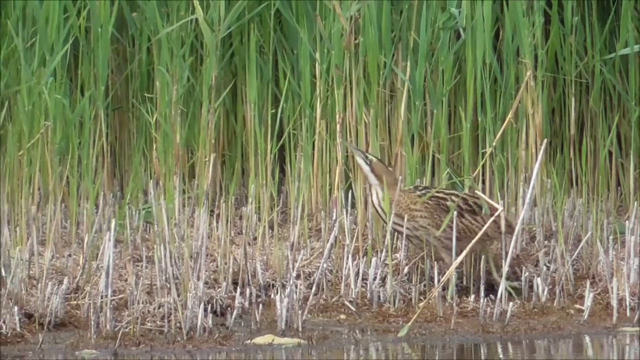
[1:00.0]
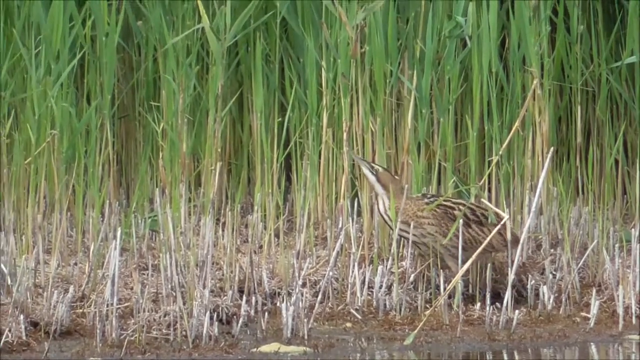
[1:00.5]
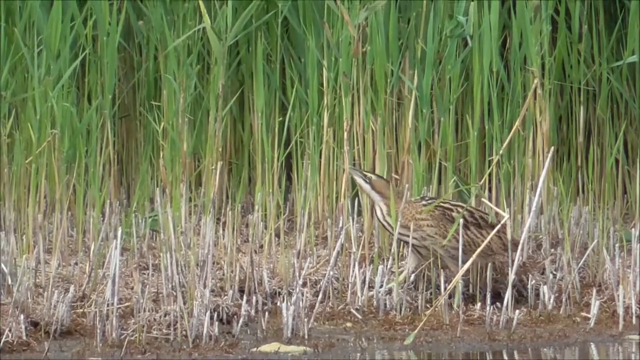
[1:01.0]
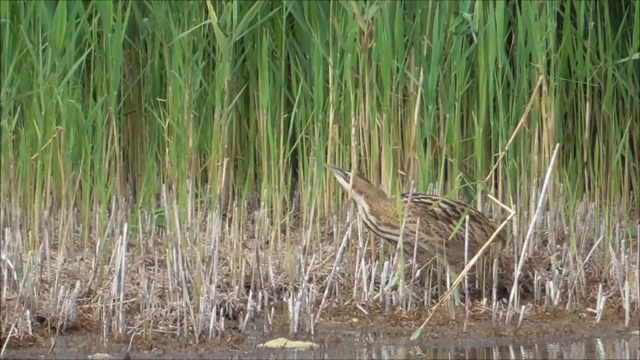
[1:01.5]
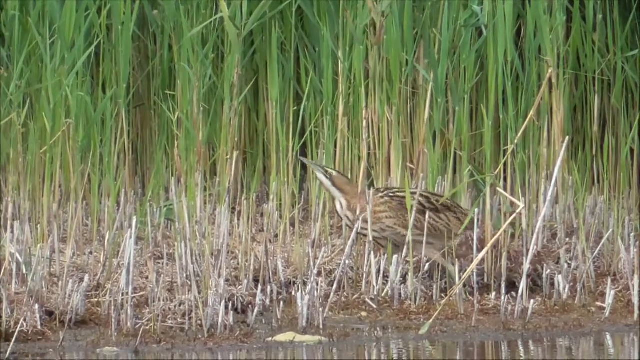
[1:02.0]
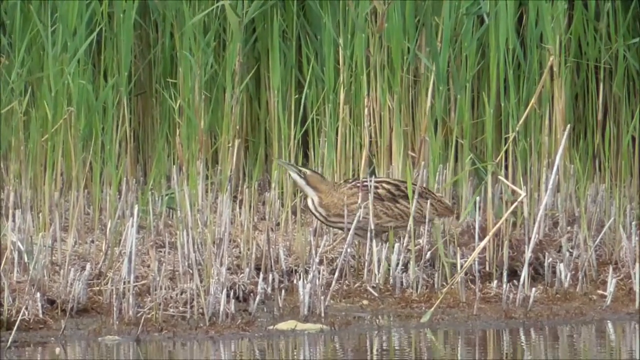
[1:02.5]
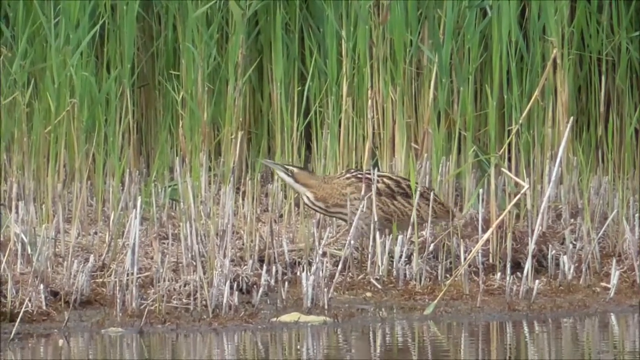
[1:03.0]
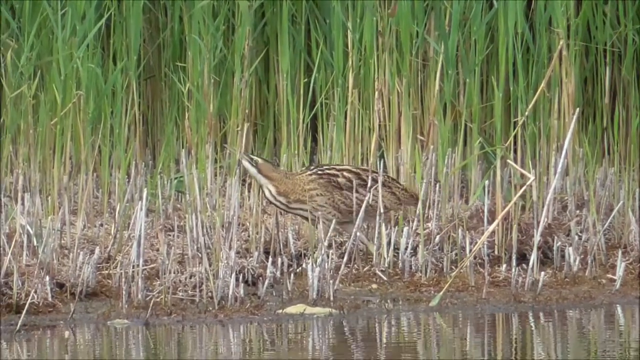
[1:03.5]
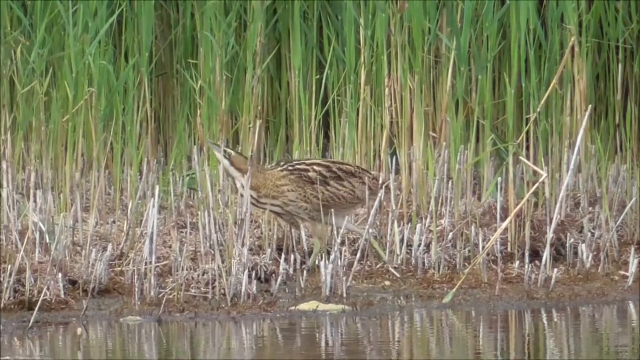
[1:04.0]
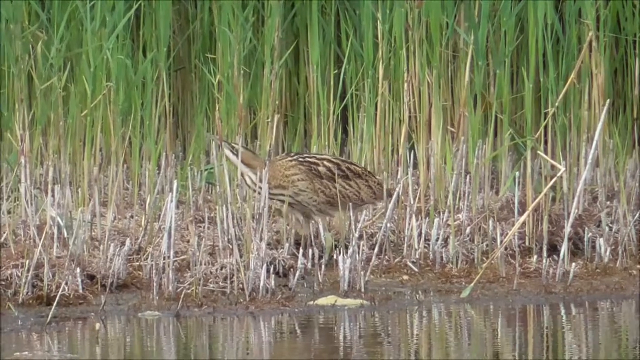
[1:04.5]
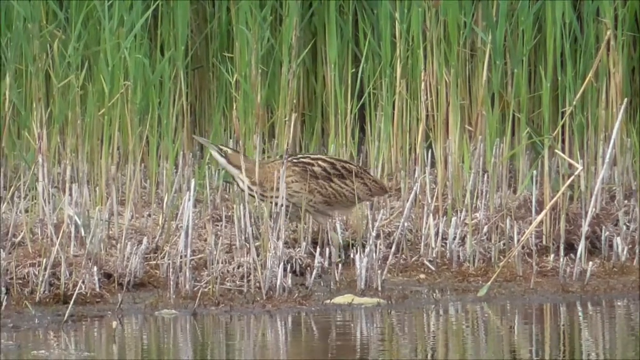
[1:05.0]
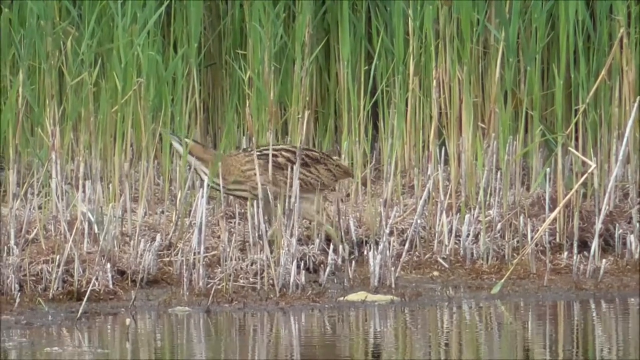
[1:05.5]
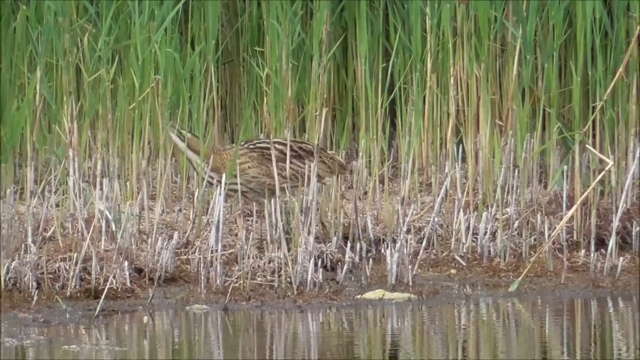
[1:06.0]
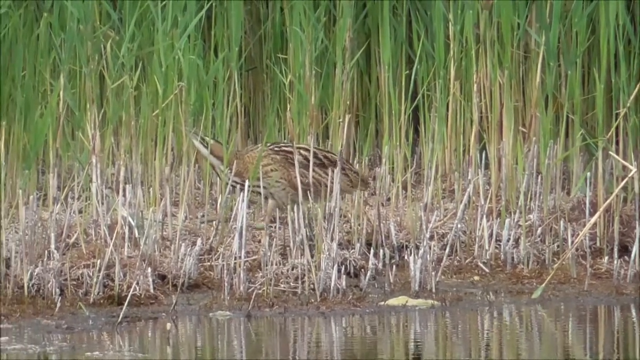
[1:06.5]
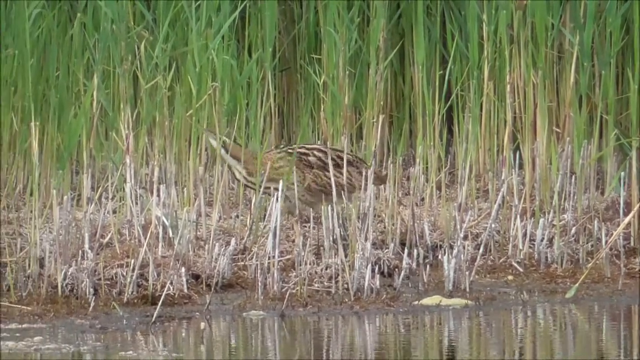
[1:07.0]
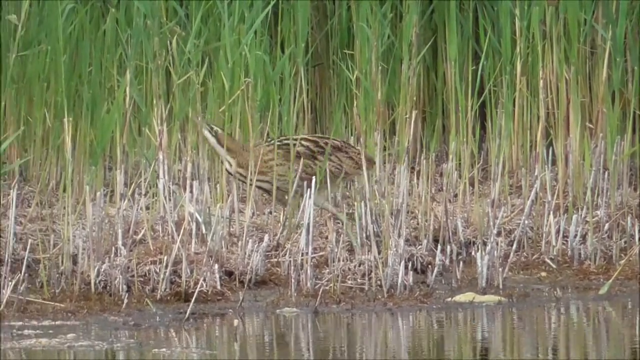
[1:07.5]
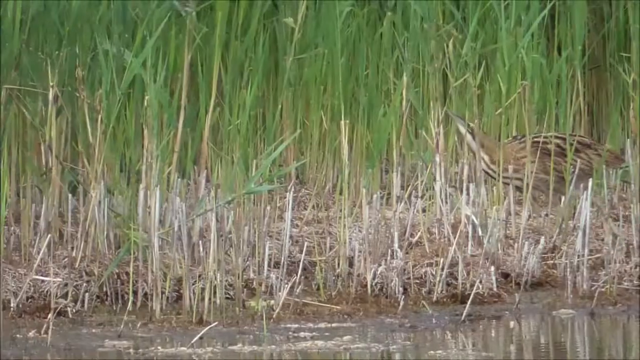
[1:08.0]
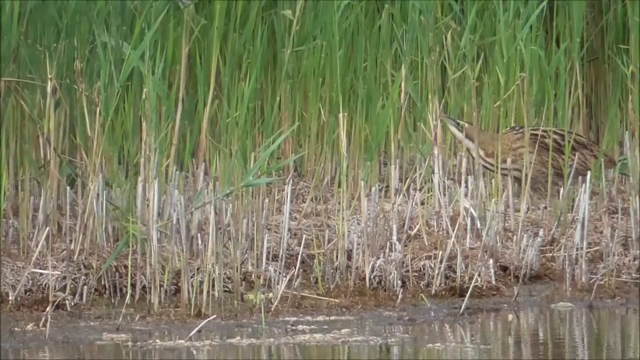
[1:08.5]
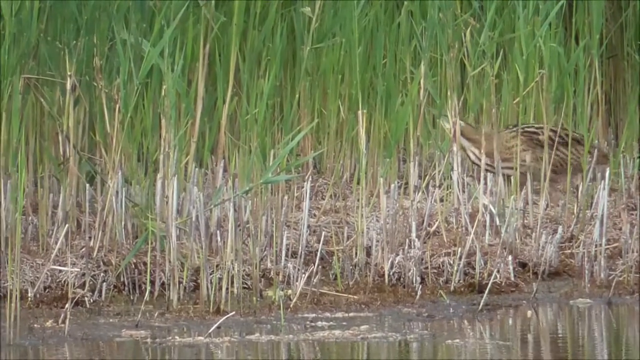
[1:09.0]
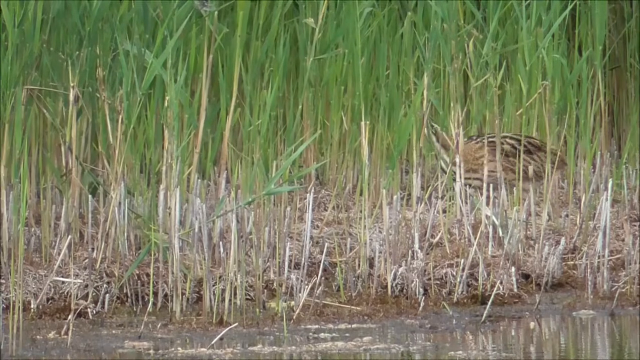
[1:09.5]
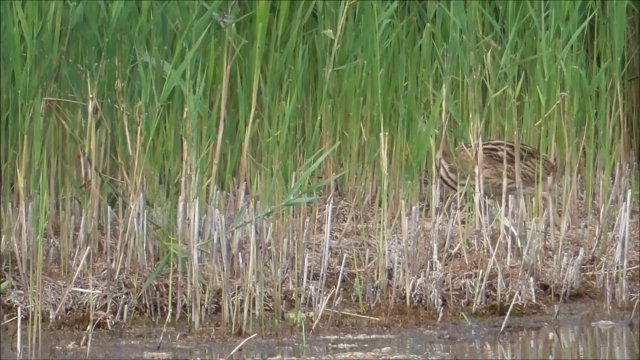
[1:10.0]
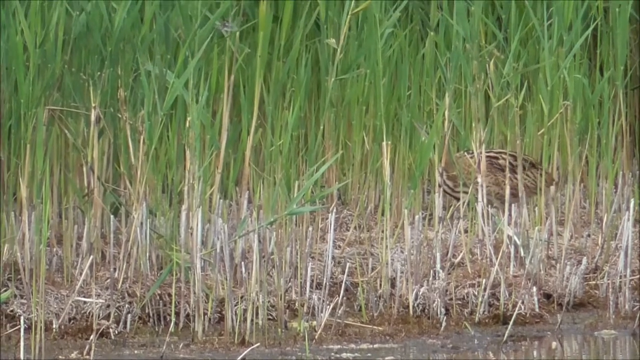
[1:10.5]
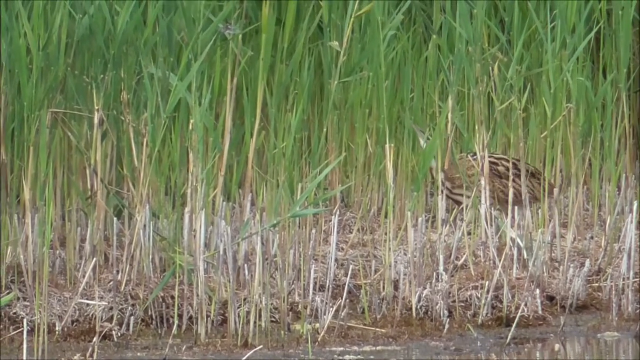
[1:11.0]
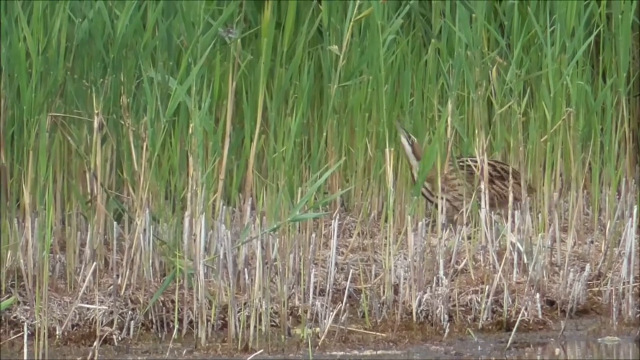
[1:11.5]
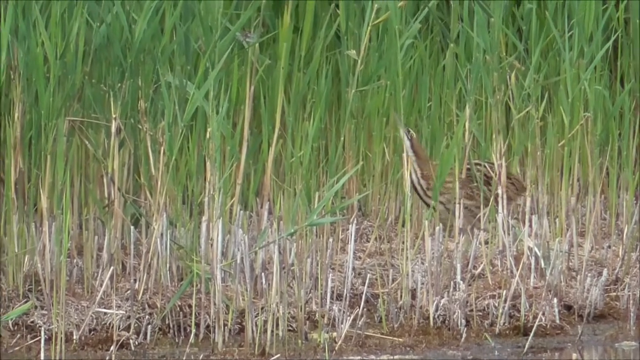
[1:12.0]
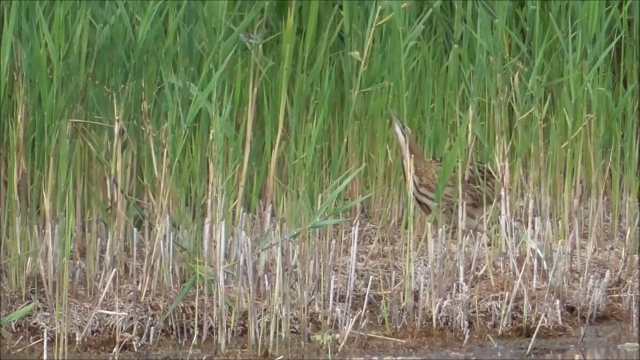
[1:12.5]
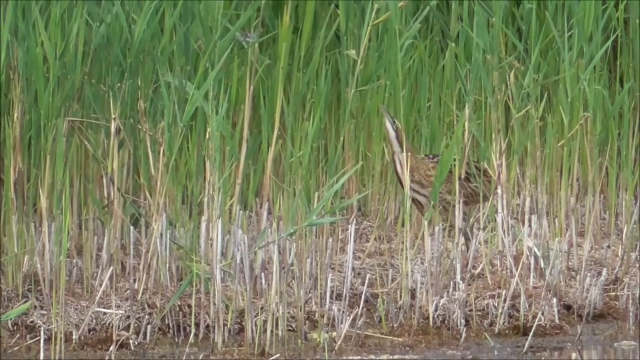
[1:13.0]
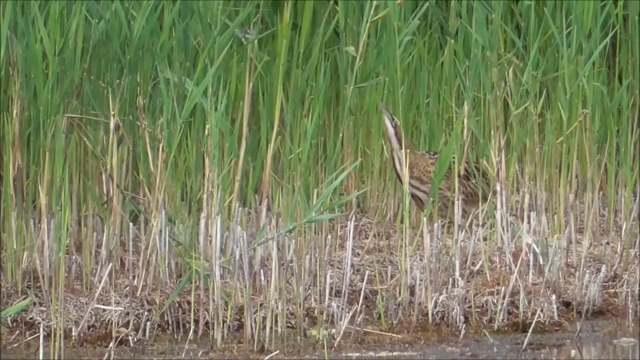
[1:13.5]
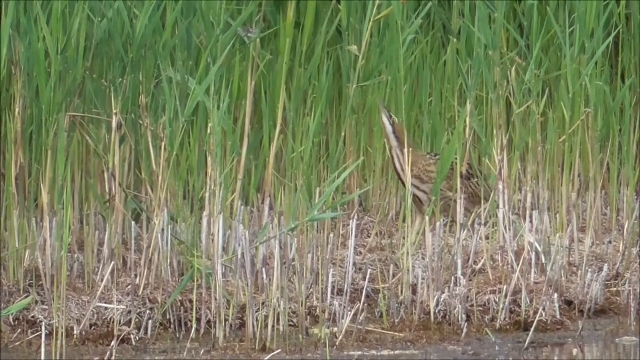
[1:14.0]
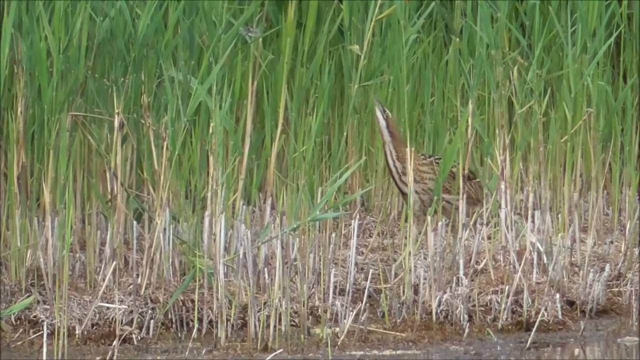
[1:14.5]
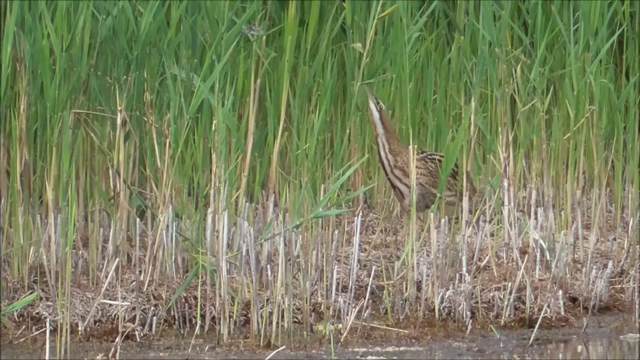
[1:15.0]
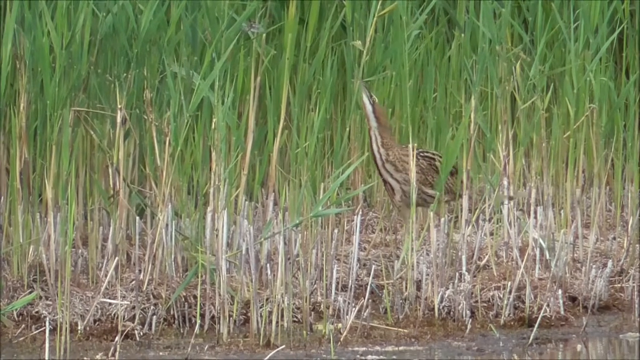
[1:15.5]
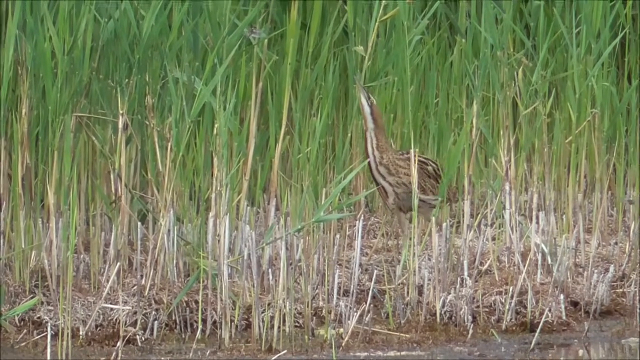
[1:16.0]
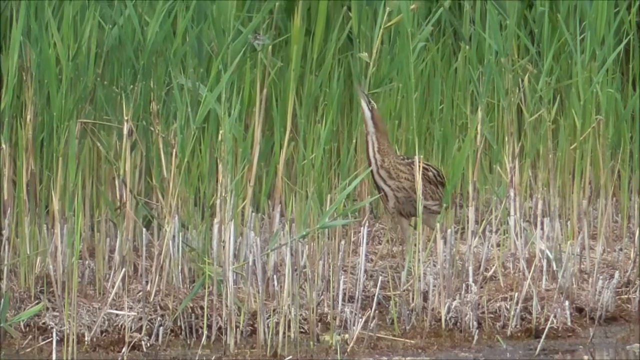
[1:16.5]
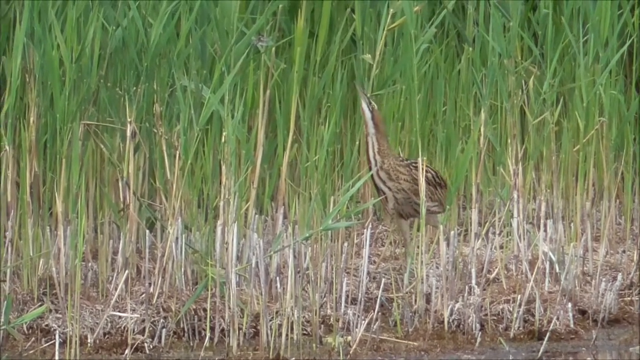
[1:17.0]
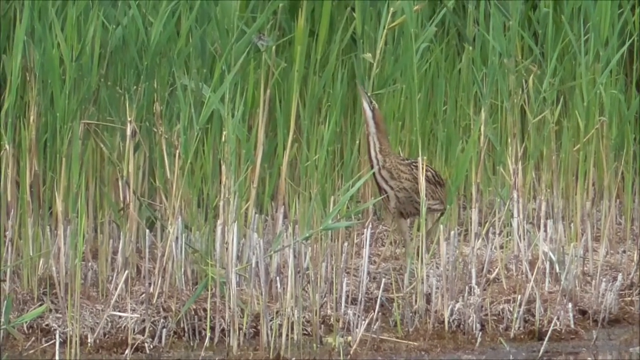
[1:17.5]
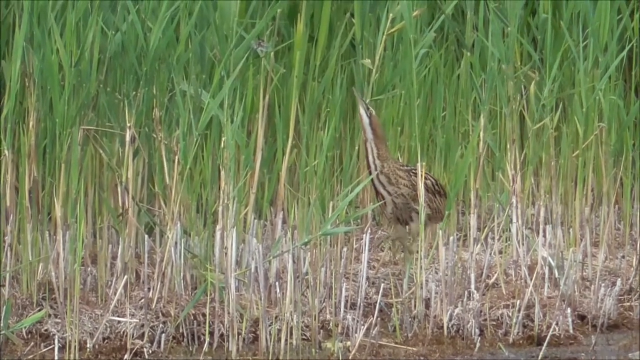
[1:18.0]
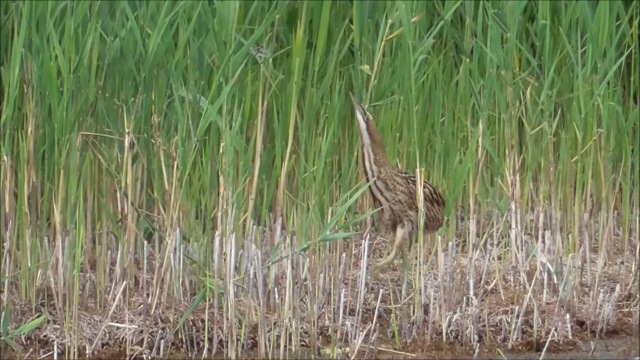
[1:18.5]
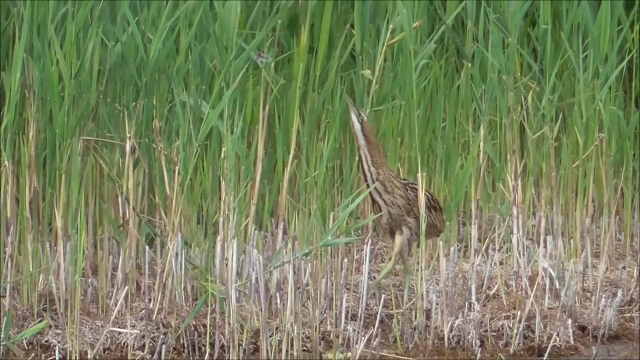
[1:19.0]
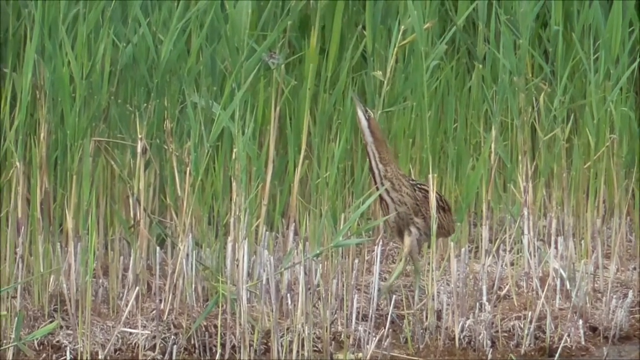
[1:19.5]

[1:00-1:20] The bird is still walking toward the left, and the camera sort of follows it, turning as needed to keep the bird in view. As the bird walks further left, some of the plants in front of it kind of cover part of its body, whereas before its body was mostly unobstructed. The bird sort of moves its head upward toward something on one of the plants, as if there is a bug on it, moving really slowly; its neck lengthens out, and its body sort of faces the camera a little more rather than being in profile. The water is sort of a grayish color and looks kind of swampy. All the plants look to be the same type: long, stocky stalks with green leaves on top. The bird looks sort of like it is in hunting mode, incredibly focused on whatever it is trying to get, and it doesn't seem to notice the person filming.